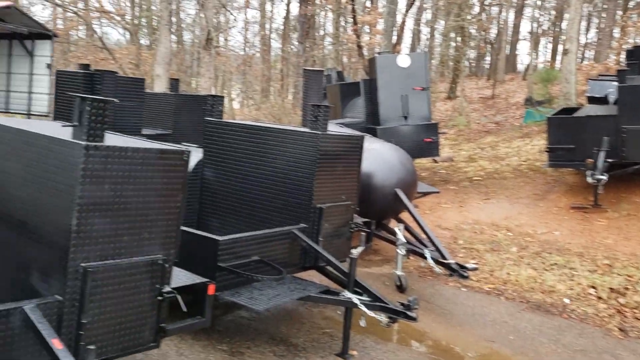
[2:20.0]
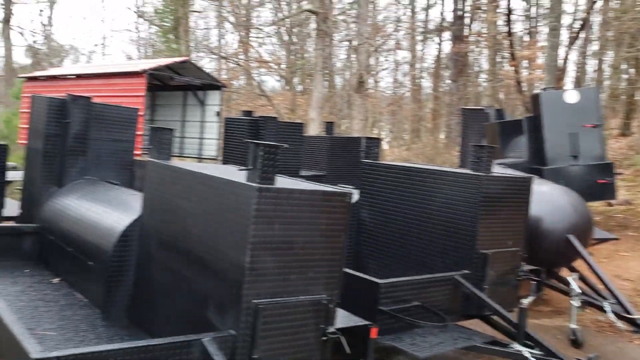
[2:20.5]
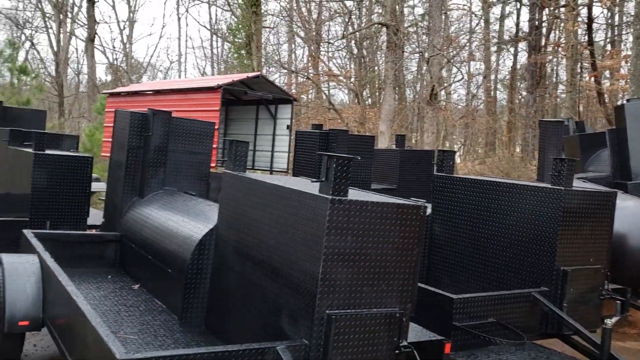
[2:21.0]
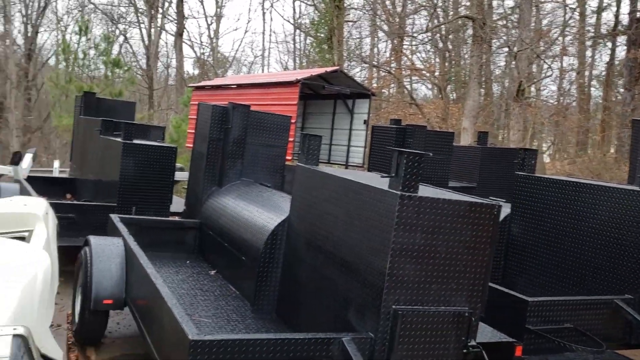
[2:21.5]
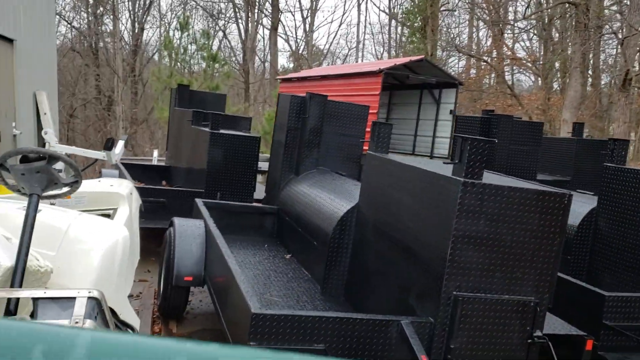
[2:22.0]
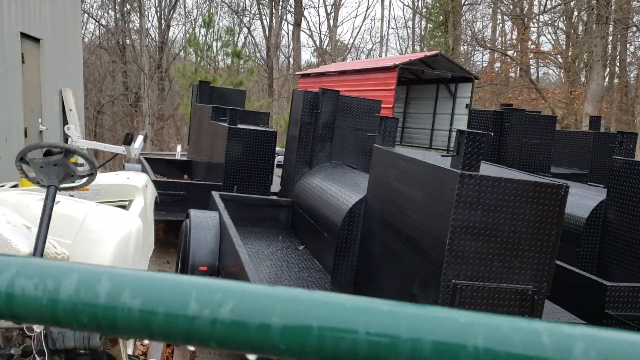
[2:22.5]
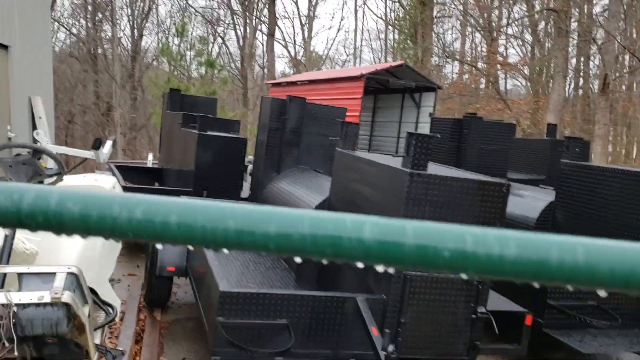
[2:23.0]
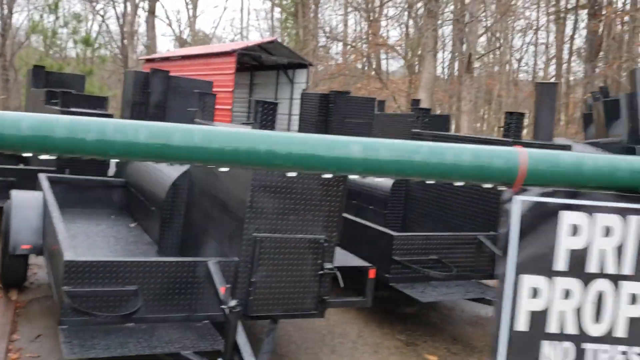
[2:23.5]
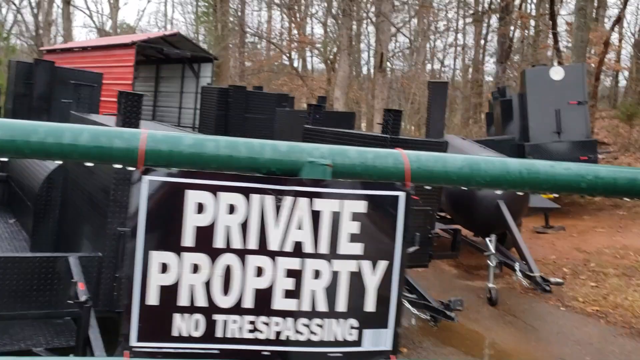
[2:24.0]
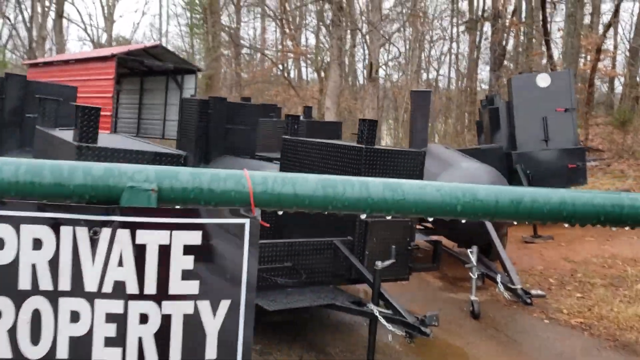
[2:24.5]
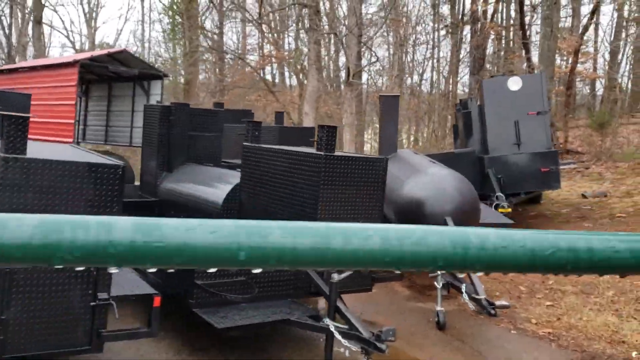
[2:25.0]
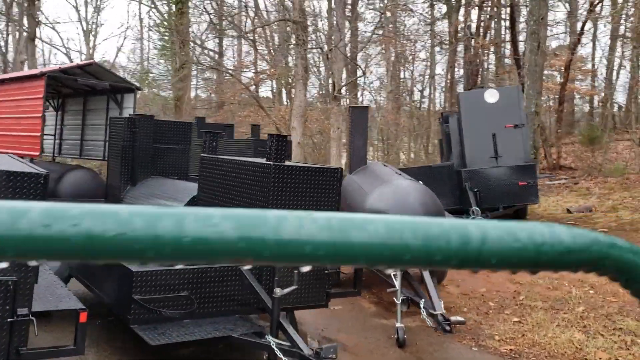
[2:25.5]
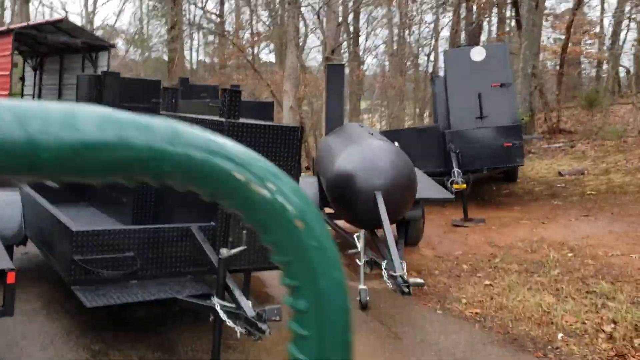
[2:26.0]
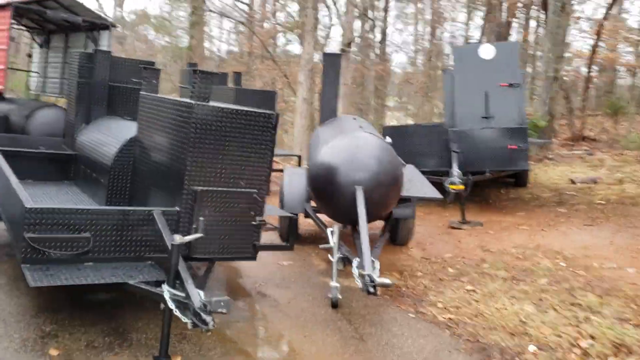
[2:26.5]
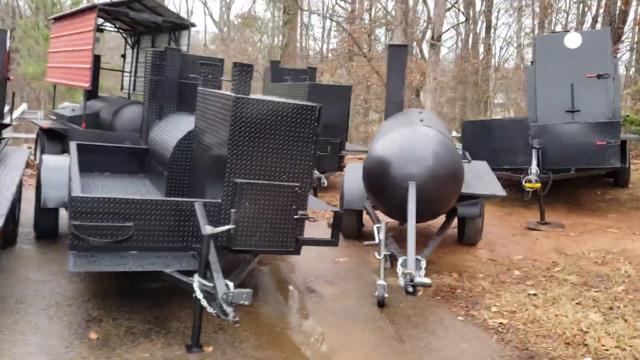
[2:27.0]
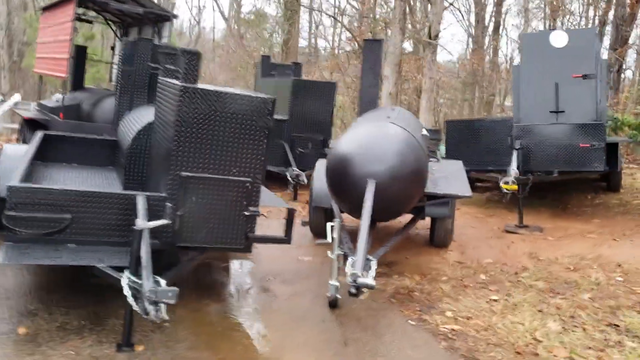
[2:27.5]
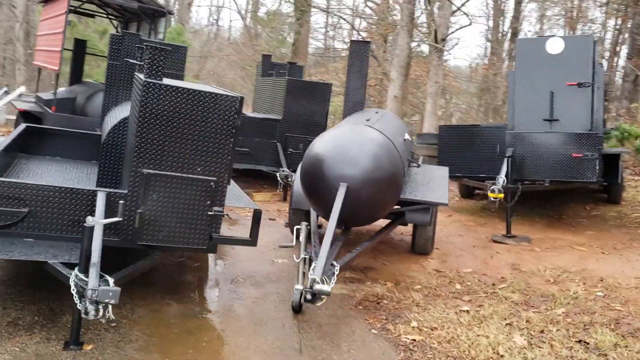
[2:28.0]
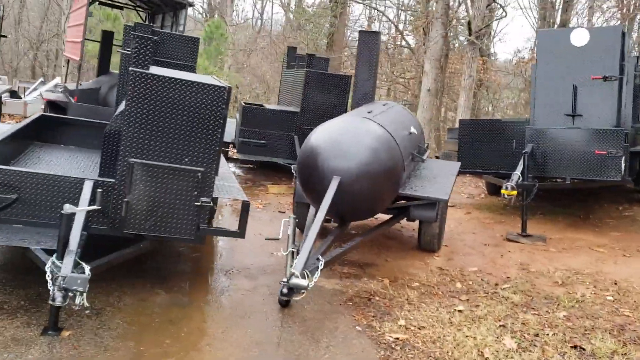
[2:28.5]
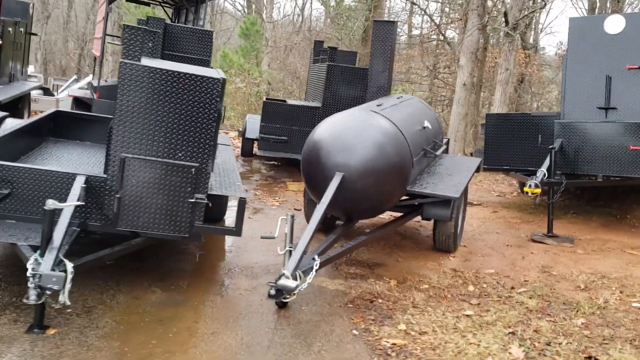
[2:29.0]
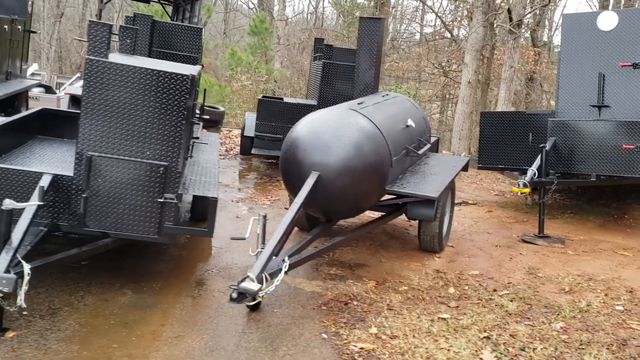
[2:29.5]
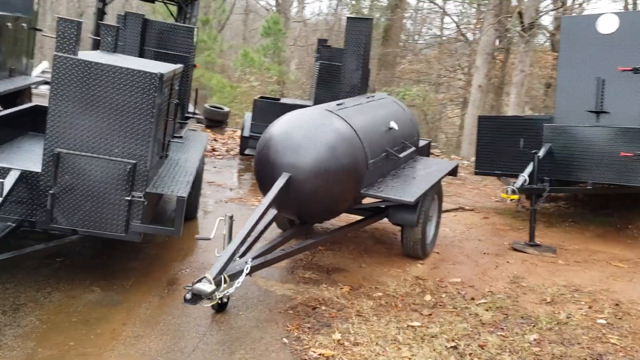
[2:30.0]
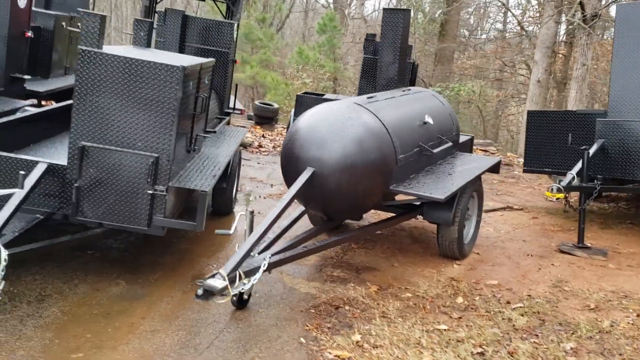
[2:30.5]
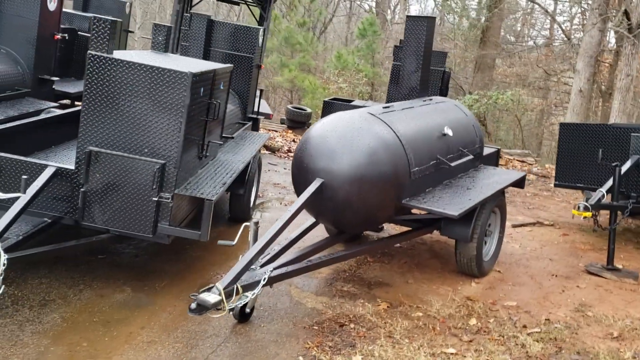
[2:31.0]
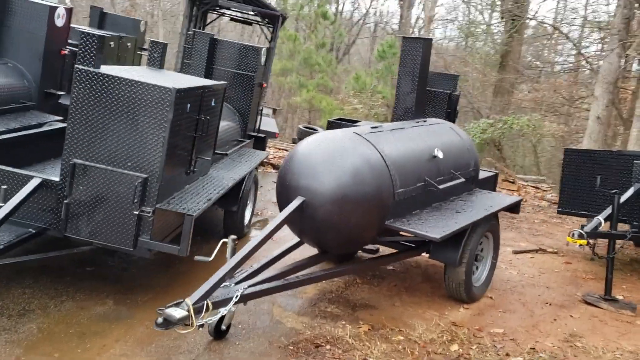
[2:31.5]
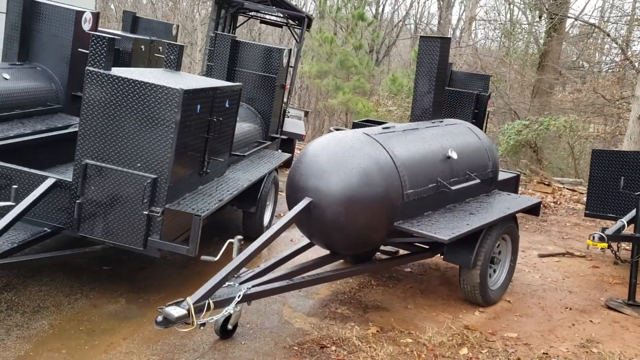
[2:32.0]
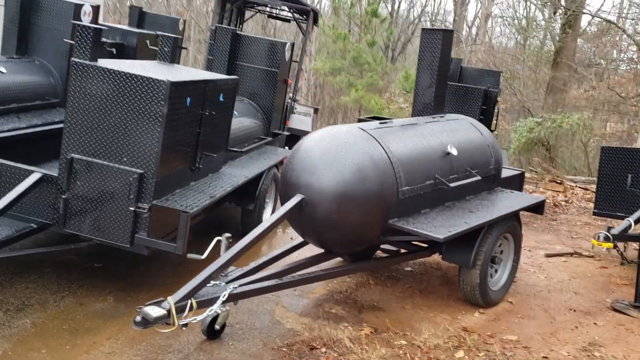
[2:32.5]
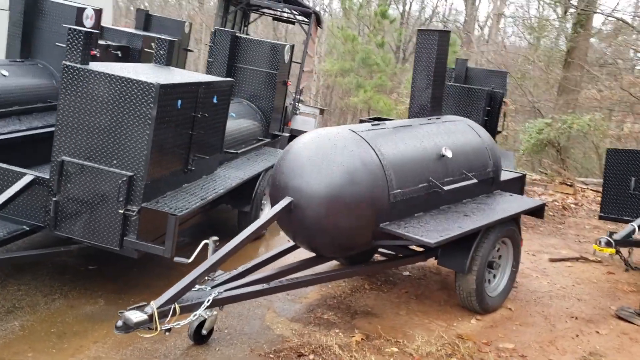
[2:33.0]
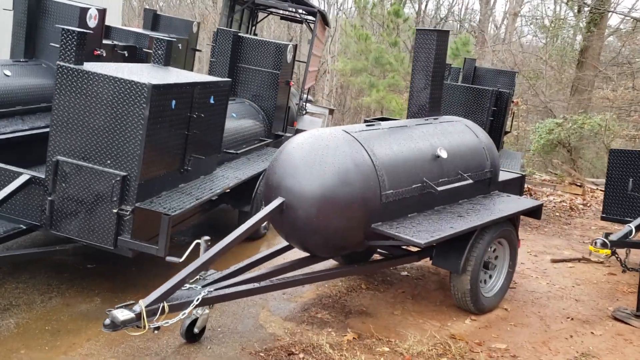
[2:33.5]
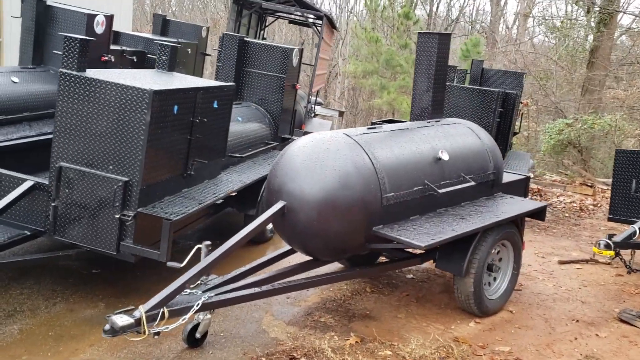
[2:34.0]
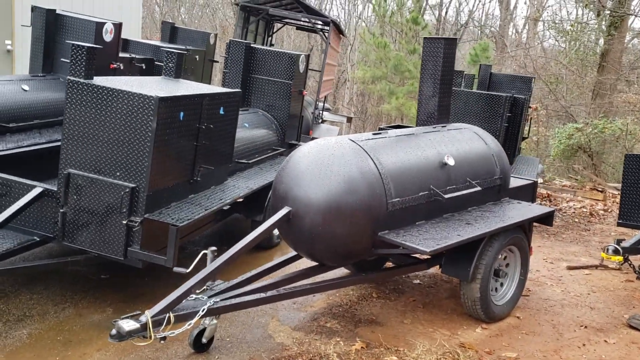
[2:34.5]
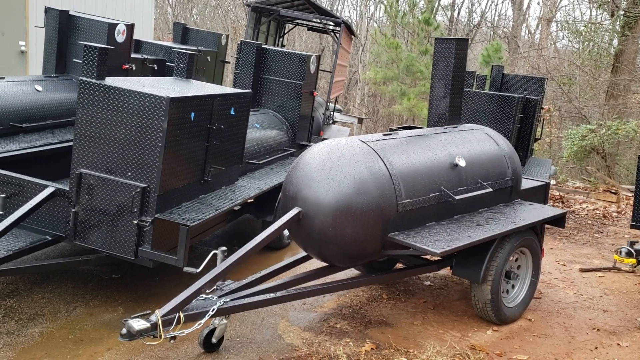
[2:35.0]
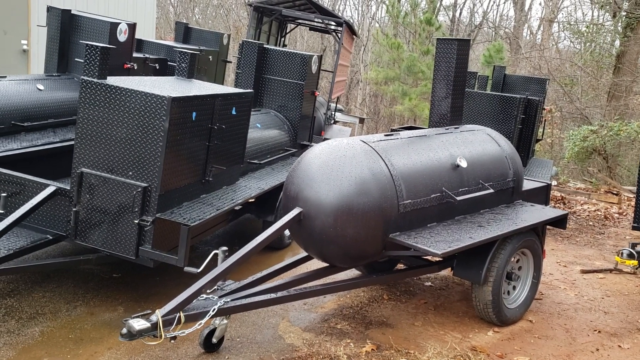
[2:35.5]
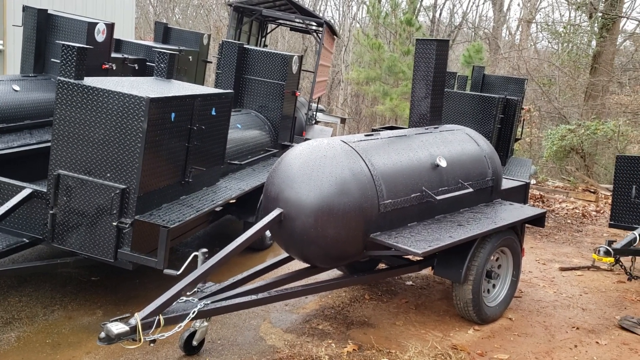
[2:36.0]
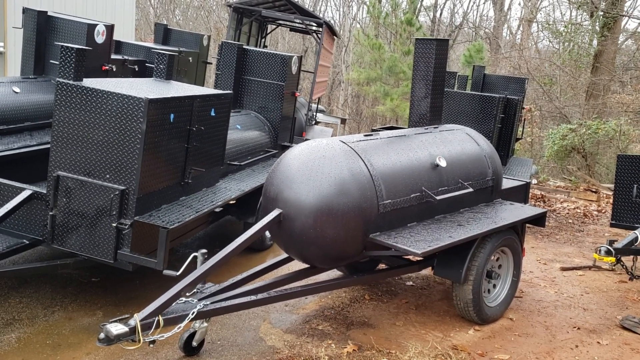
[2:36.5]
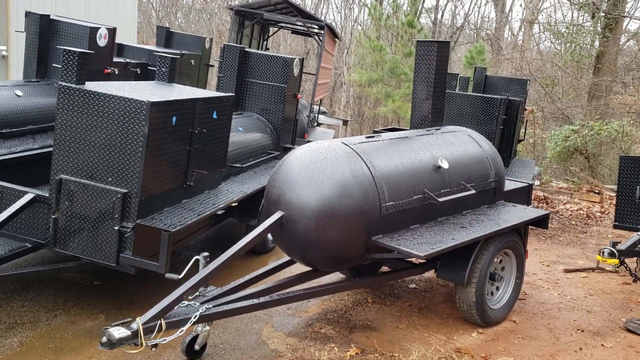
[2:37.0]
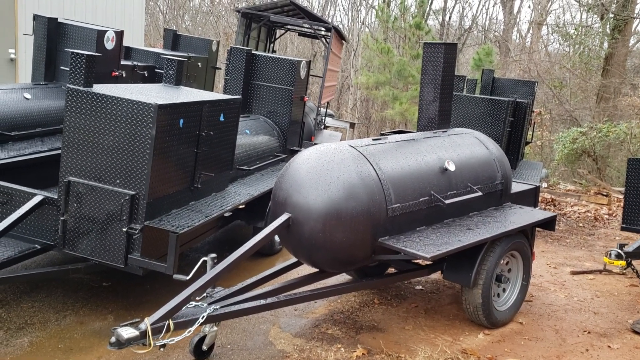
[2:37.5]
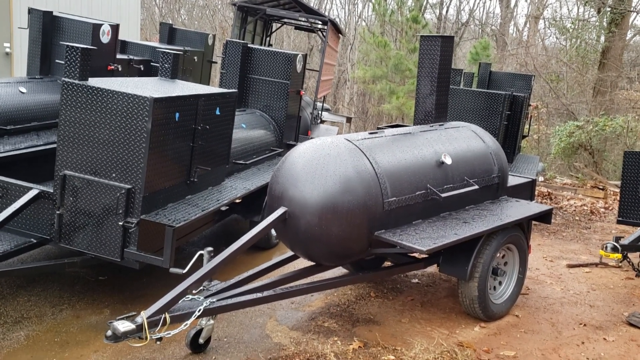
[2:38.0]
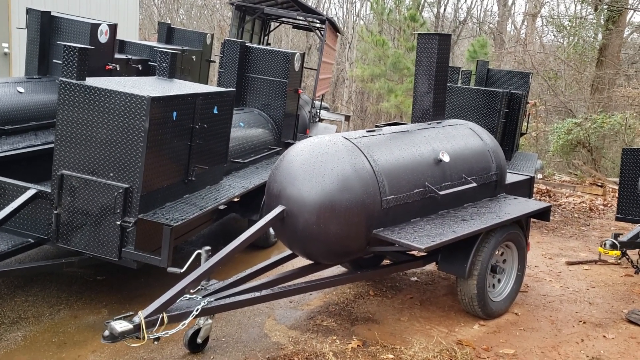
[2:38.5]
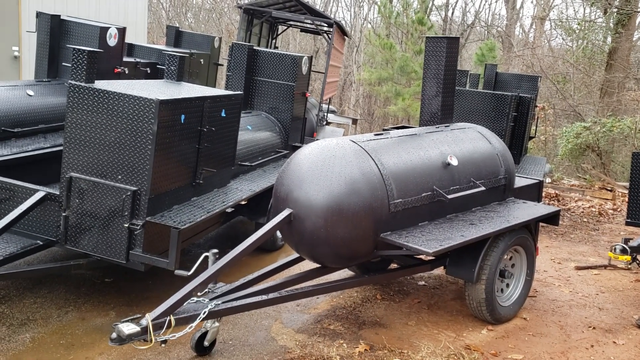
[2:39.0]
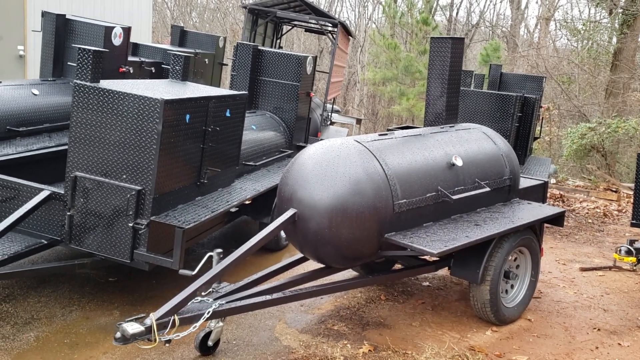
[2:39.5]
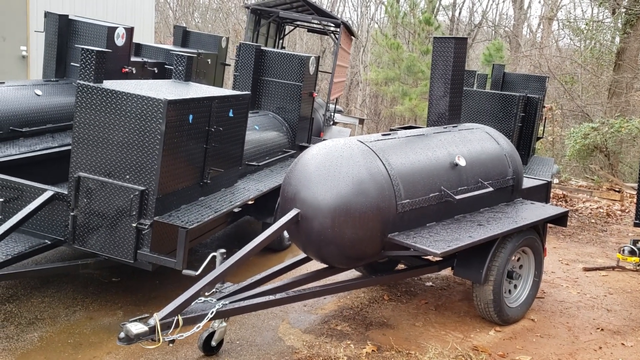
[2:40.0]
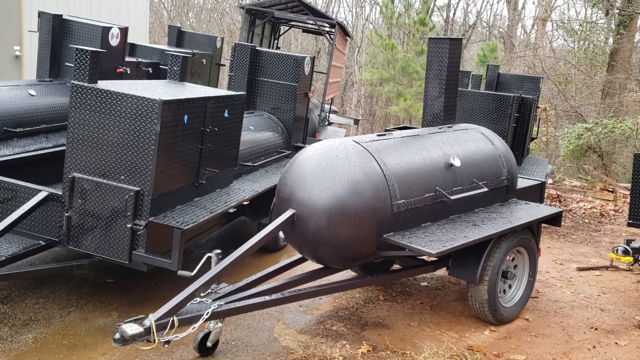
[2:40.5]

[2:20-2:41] The trailer stands still in front of a storeroom door, with the broken table at the back of it and a light. The dustbin, the chair and the yellow container are still there, and the other trailer is still standing inside the storeroom. There is a blue van and the other golf cars, and the green gate. The other braai stand trailers stand at the back, and a white car stands beside. It is a private property. There are many trees at the back and an open red house. The trailers, which look like braai stands, all have two wheels.